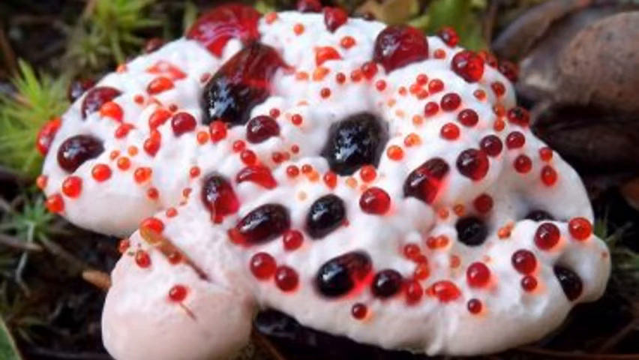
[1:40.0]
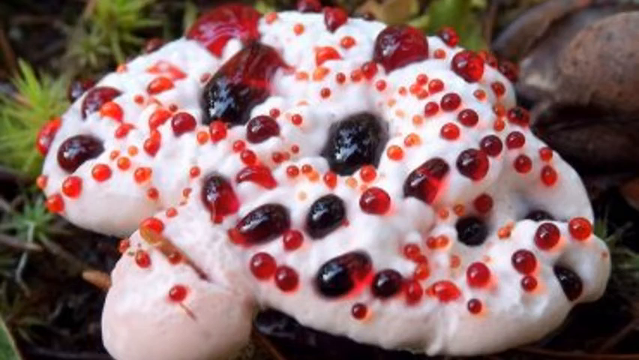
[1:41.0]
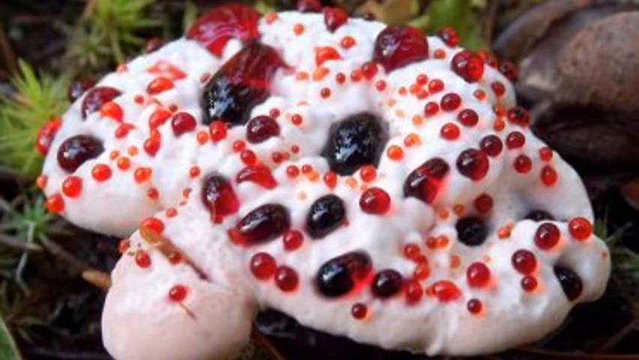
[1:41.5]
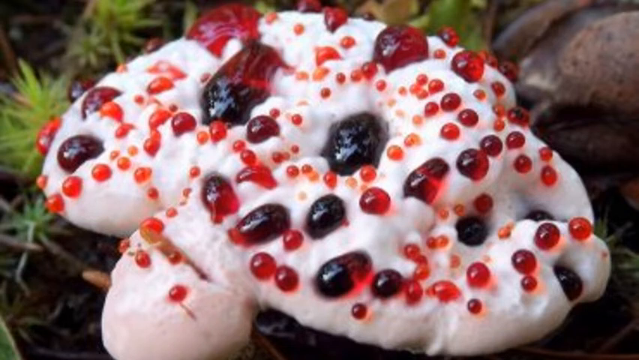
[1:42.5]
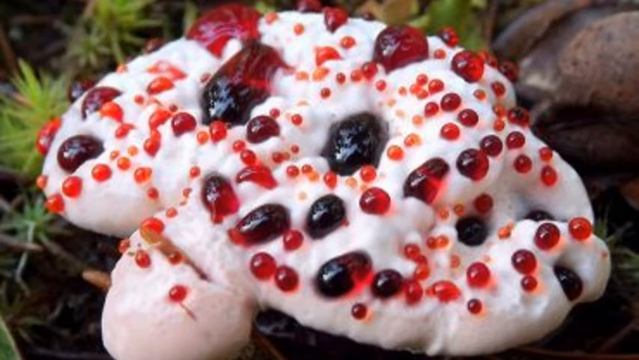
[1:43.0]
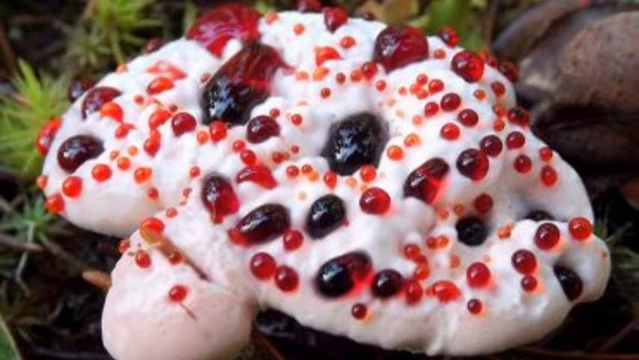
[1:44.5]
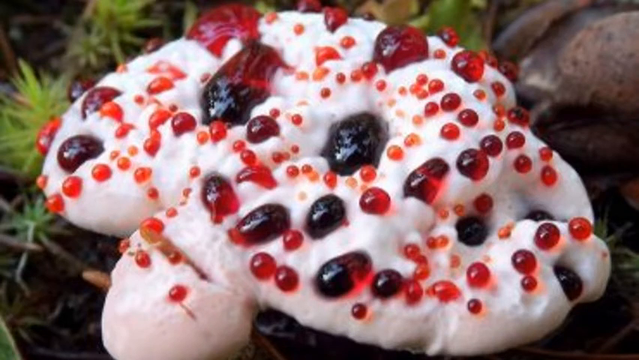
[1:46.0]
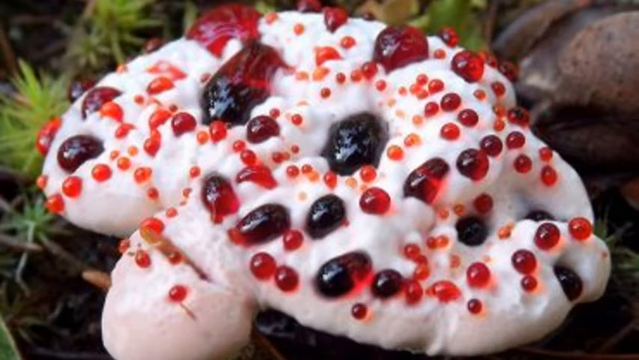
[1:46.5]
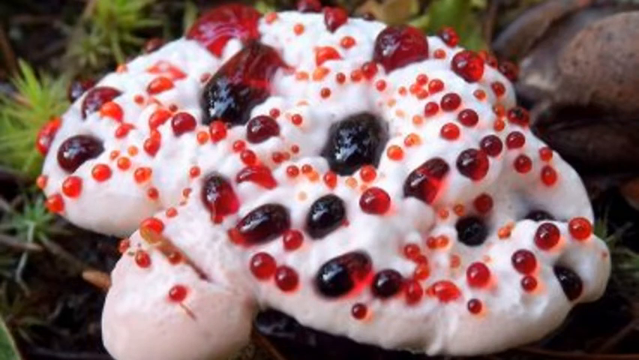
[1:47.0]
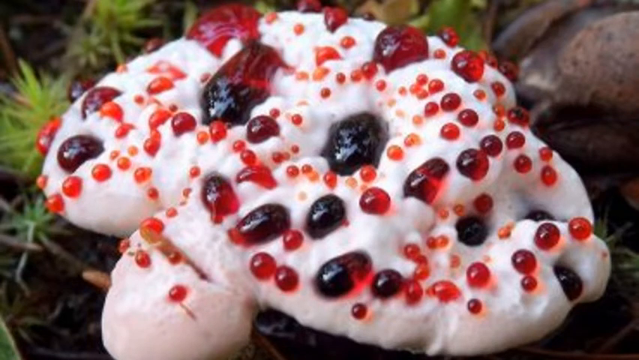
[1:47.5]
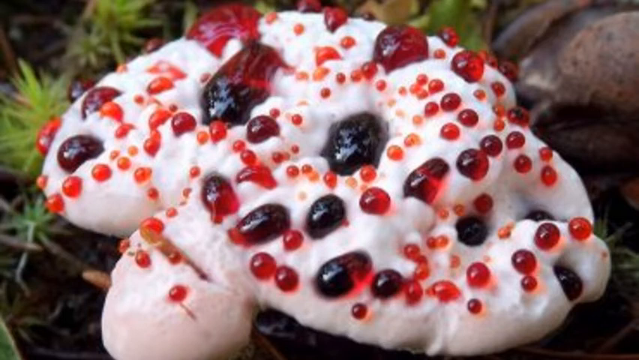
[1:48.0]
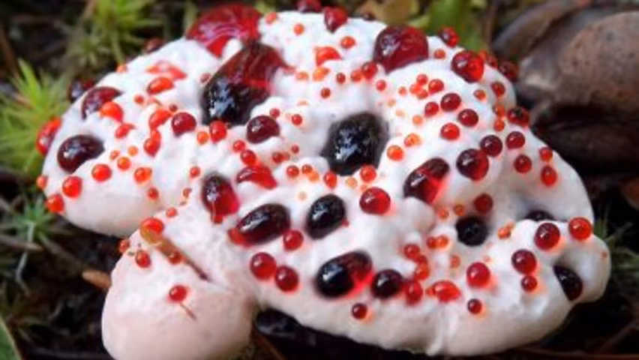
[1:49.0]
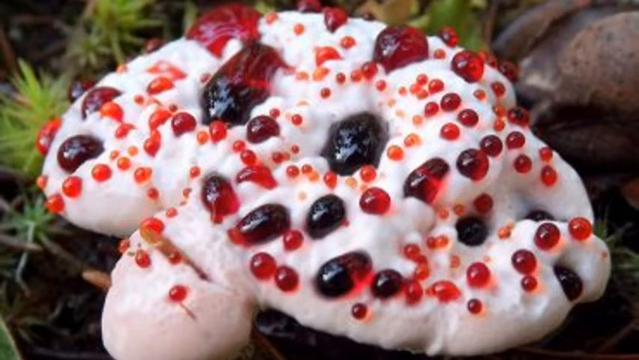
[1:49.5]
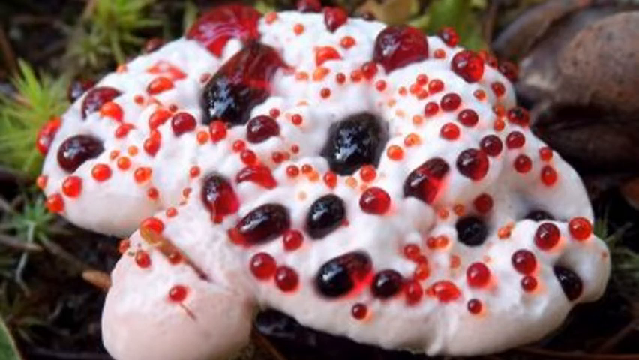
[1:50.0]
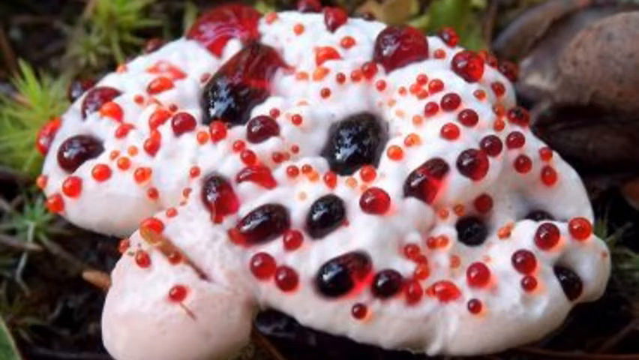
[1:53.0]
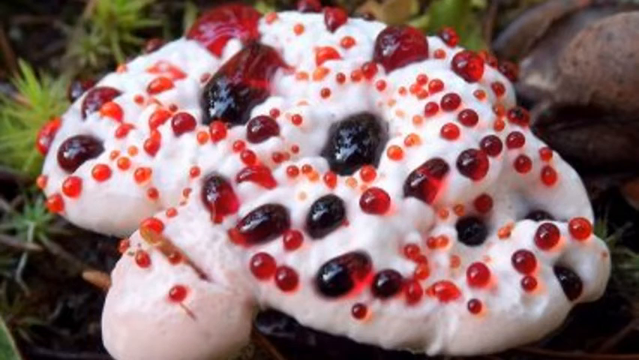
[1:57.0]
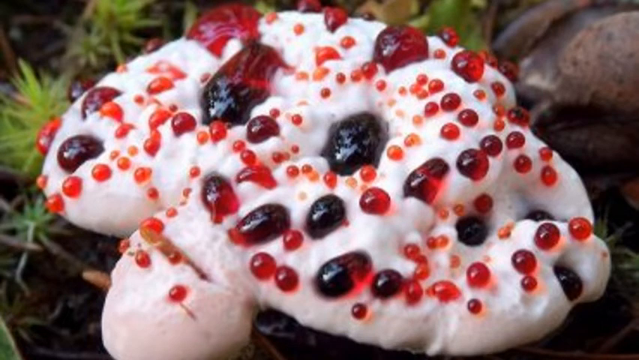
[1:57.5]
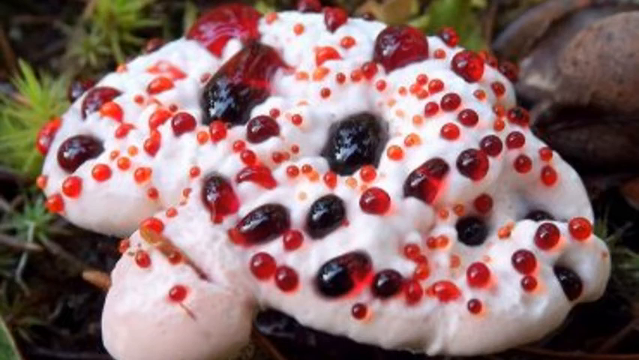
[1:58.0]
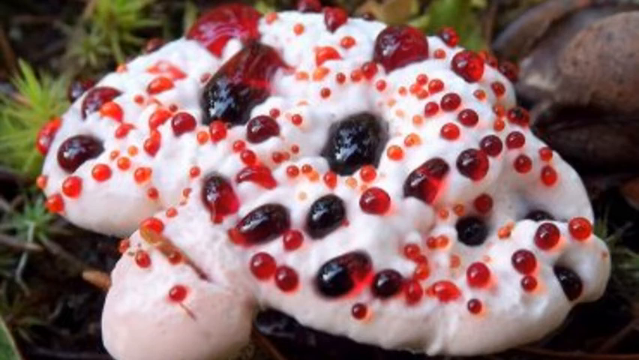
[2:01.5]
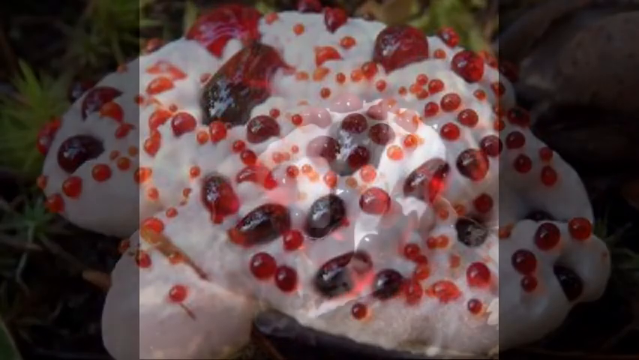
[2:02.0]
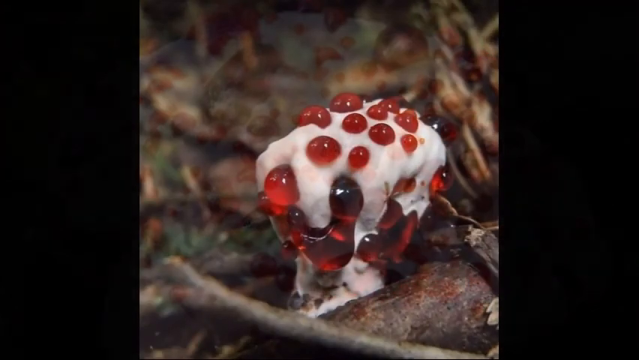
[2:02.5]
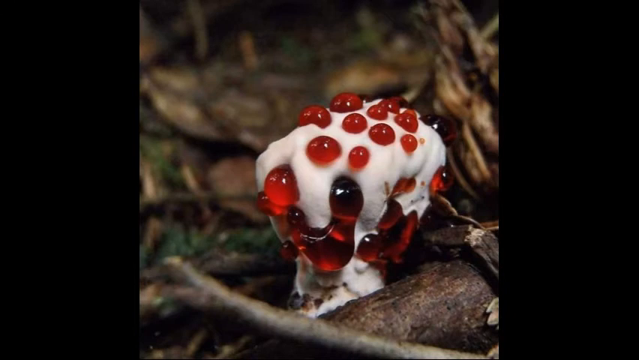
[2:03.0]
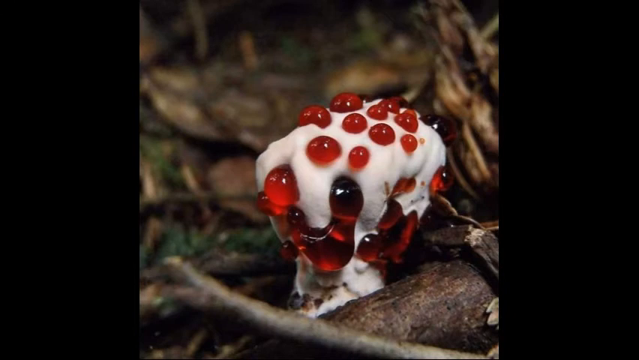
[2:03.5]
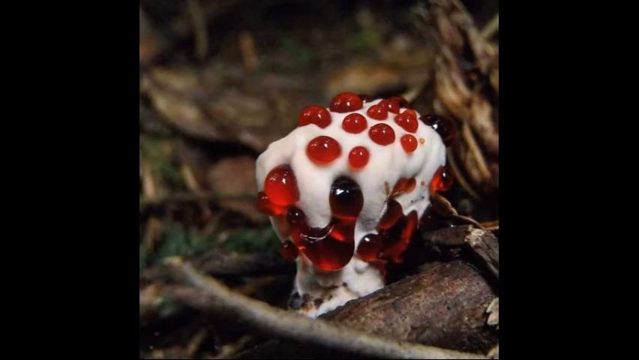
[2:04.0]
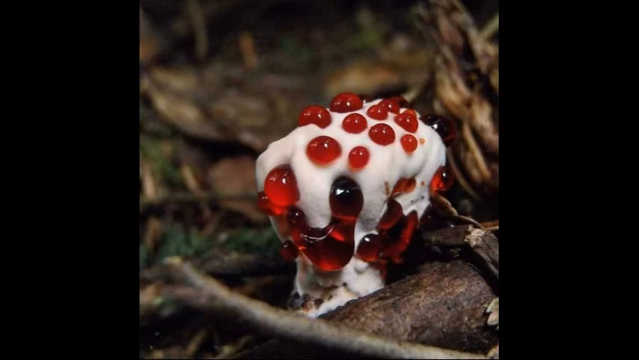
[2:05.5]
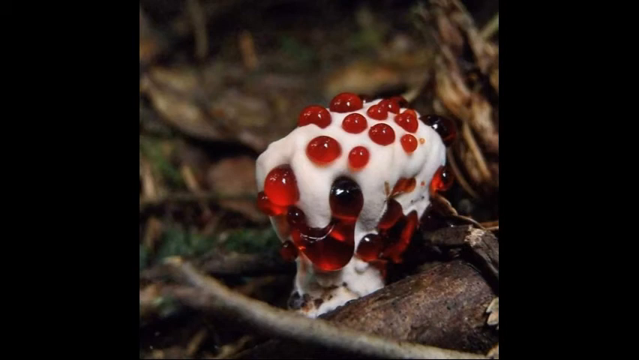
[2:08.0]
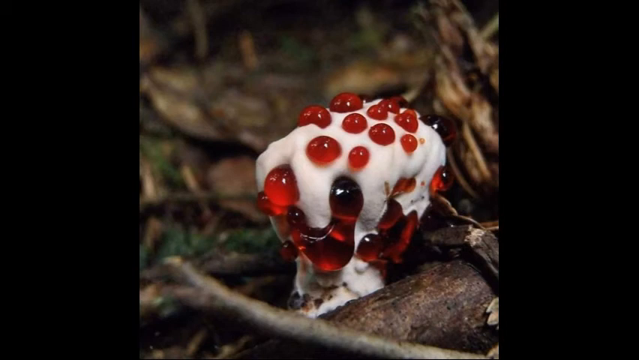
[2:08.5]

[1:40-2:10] The large fungus with a bubbling effect on its large white head remains in view, showing the various shades of red of the attached liquid blobs. The next image shows a different, very small fungus, stubby and short, growing up from the centre of what look to be tree roots. It has a smooth white head with several drops of the red liquid blobs attached, and towards the bottom of the fungus are some longer-shaped blobs in a darker shade of red. Forest vegetation, including trees, lots of twigs and sticks, and wild grass, is in the background. The different images show how the fungi vary widely in shape, size and appearance, while all of them have red liquid blobs attached.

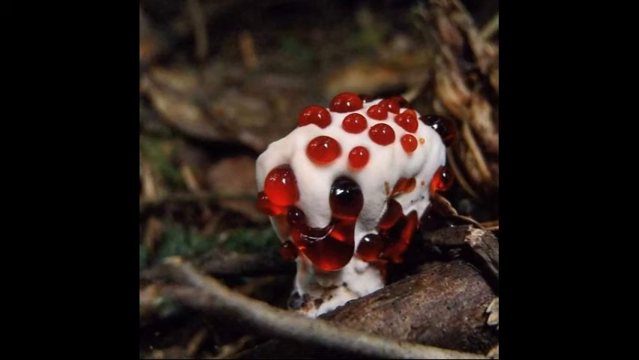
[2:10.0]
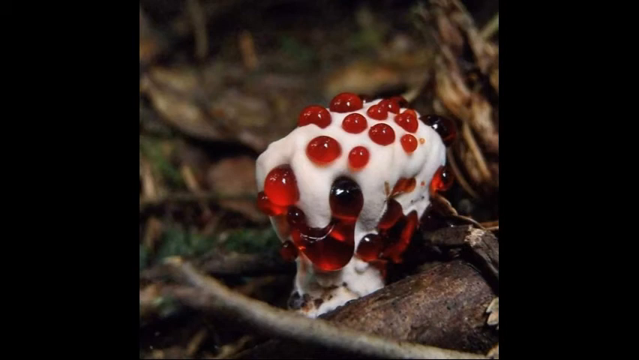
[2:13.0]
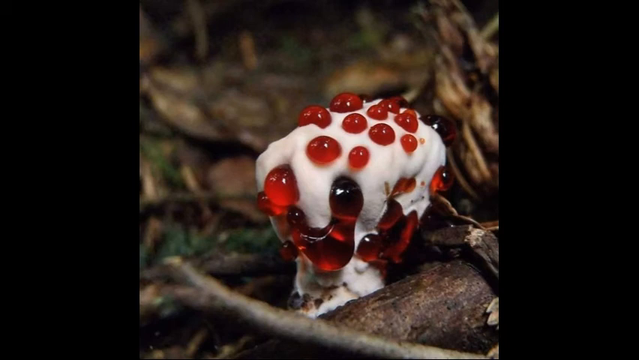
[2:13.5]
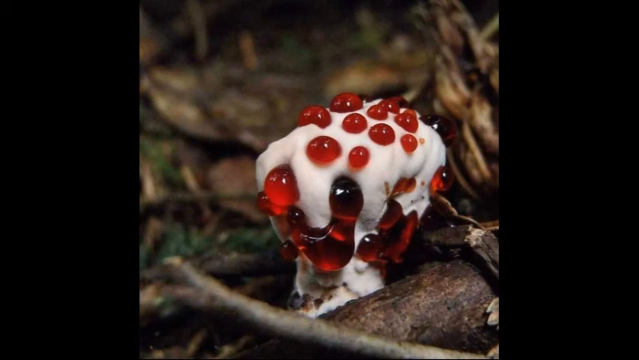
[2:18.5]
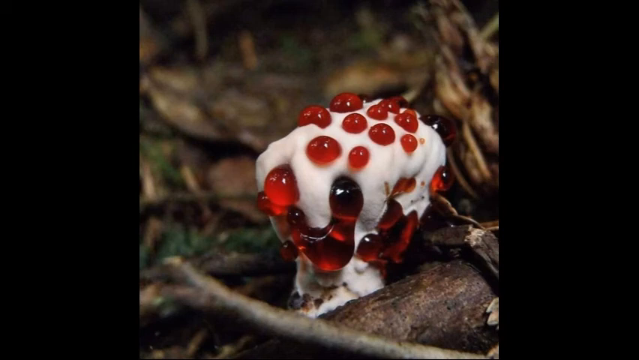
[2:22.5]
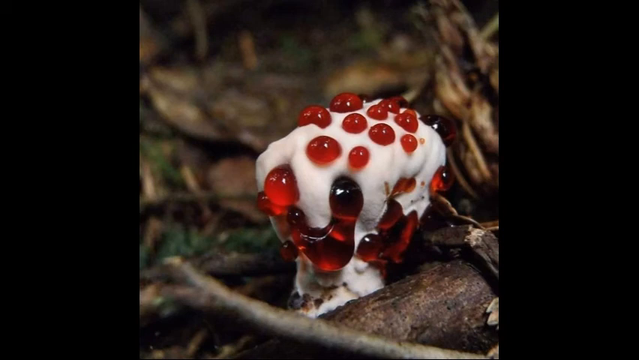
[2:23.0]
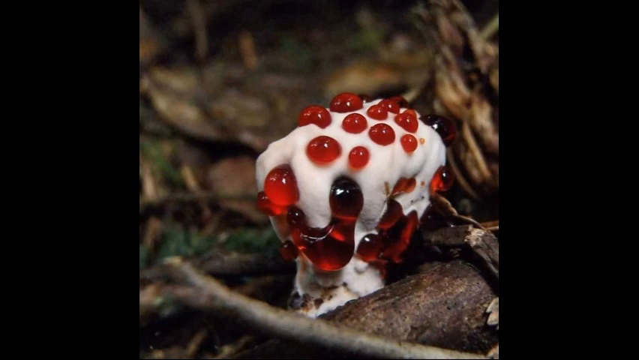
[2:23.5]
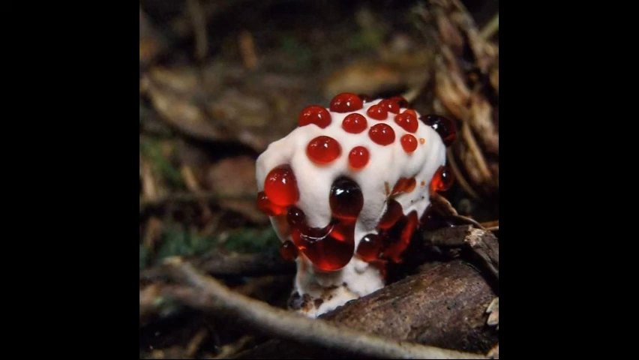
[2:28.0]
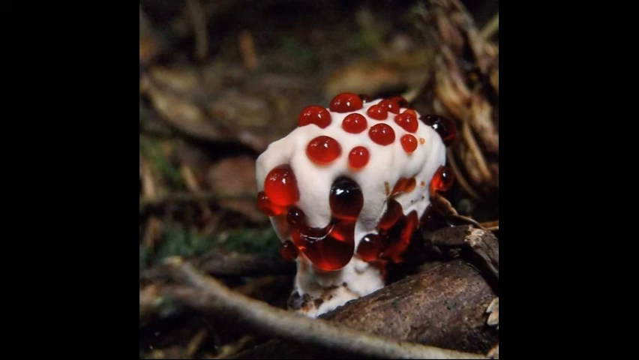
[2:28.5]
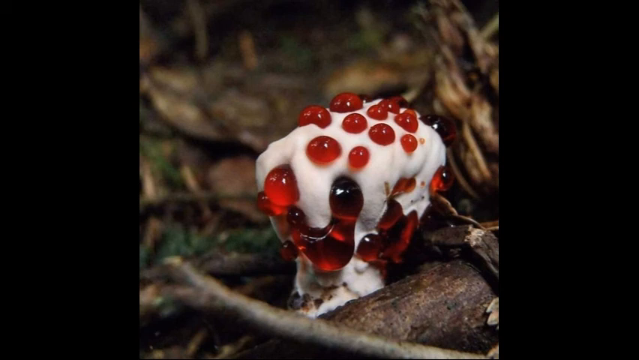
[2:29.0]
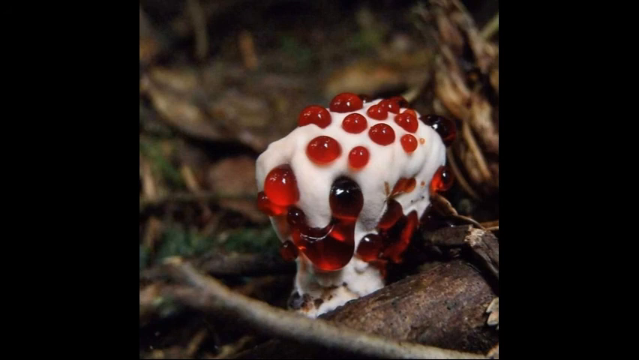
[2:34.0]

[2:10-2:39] The small, stubby, short fungus appears, largely covered in the red liquid blobs. All of the fungi images are displayed, all in a forest setting with trees, vegetation, twigs and tree roots, some of the fungi growing in and around the tree roots, and the odd patch of grass growing around the fungi. The images show how the fungi differ in the colour of the red blobs and vary in size, texture and shape. In the bottom left-hand corner of the screen, the formal name of the fungus reads "HYDNELLUM PECKI", and underneath, the more common name reads "Red juice tooth fungus".